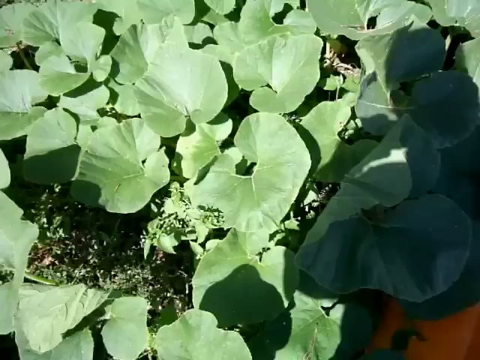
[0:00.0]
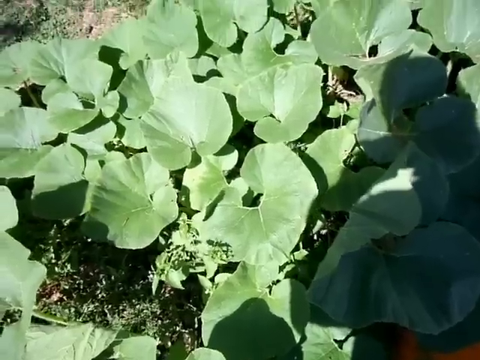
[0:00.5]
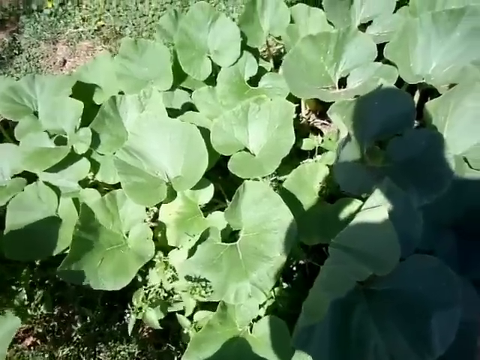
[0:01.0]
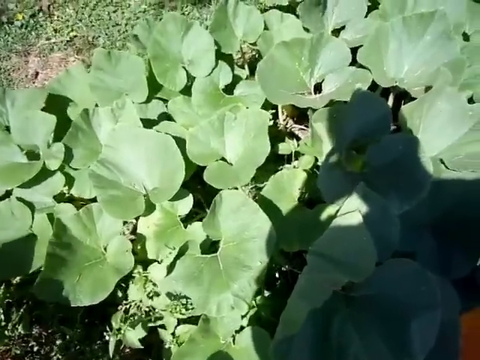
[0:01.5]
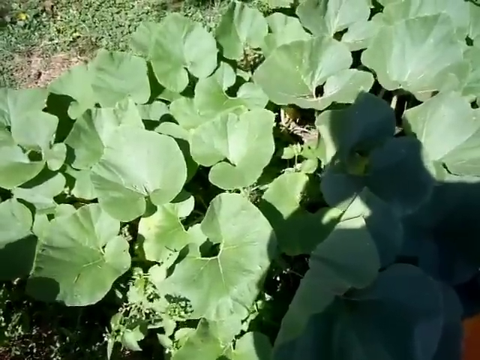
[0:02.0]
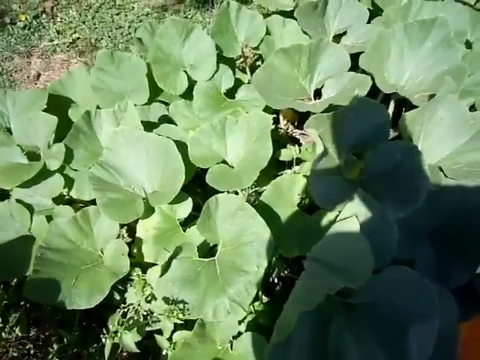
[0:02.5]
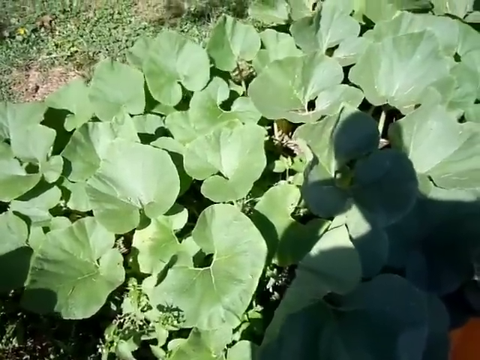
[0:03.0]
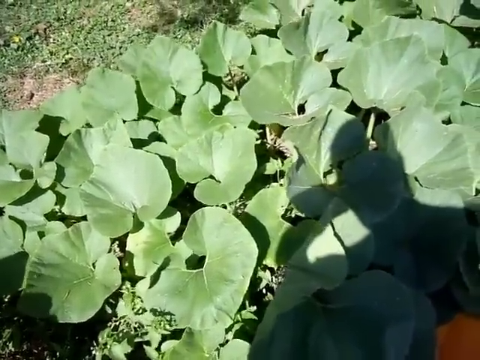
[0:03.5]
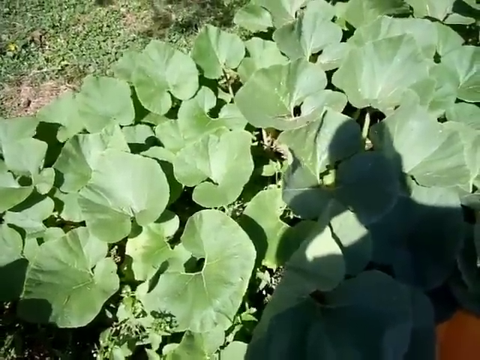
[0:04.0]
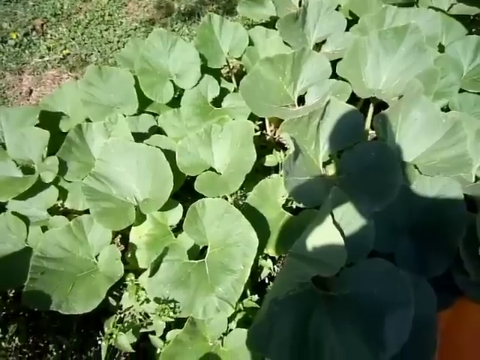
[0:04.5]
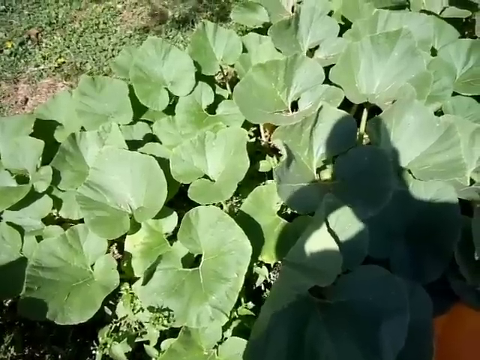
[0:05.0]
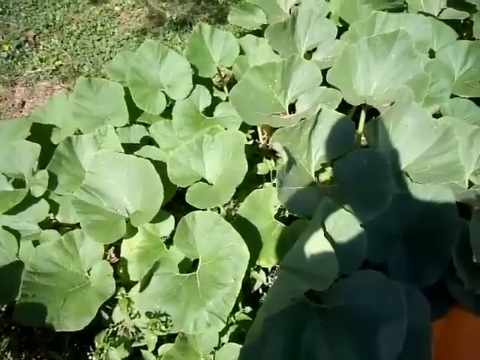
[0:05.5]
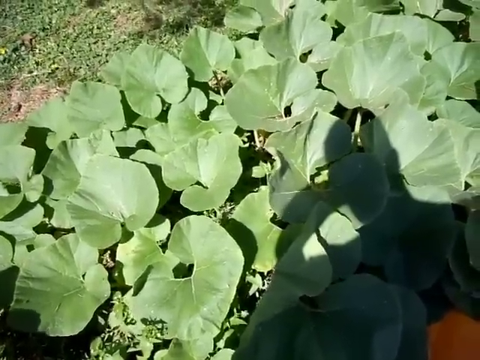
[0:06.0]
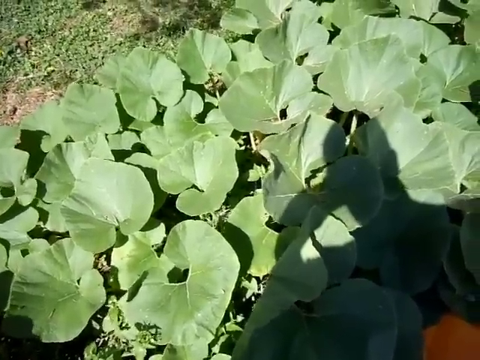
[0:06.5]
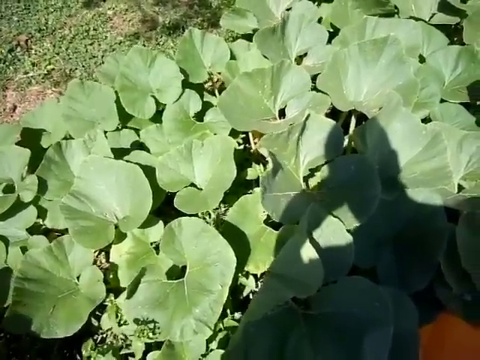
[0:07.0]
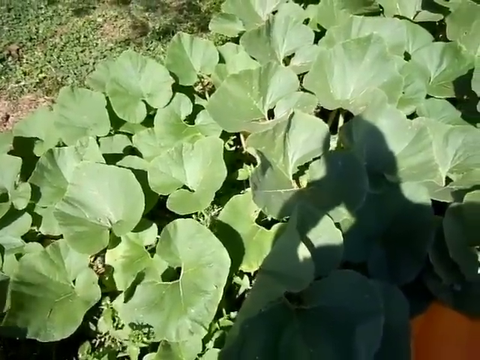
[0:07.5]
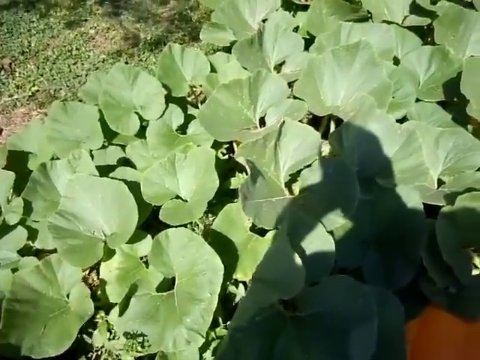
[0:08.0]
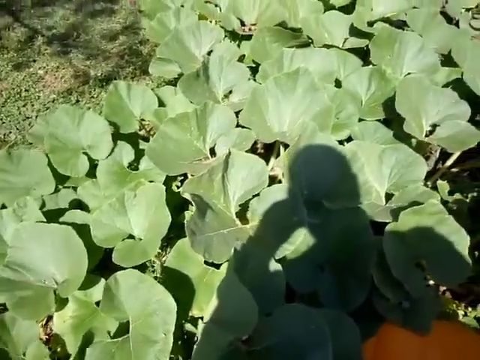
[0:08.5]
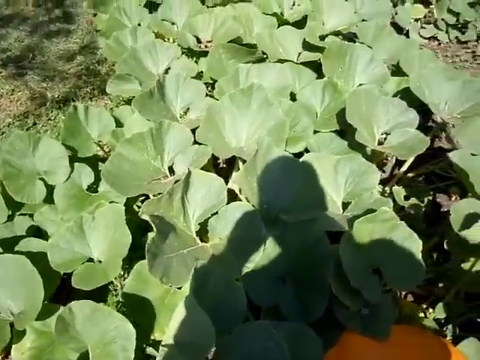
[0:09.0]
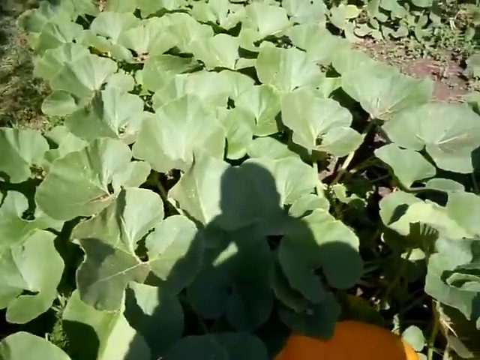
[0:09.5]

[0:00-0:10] A large green pumpkin vine fills the view. It is windy, and the pumpkin leaves are blowing quite hard in the wind. In the upper left of the frame is a patch of grass. In the lower right and center right is the shadow of the person filming, who is backlit by the sun; the shadow has a hand raised to the face, probably holding a phone camera. The camera switches around, and an orange pumpkin appears at the bottom of the screen.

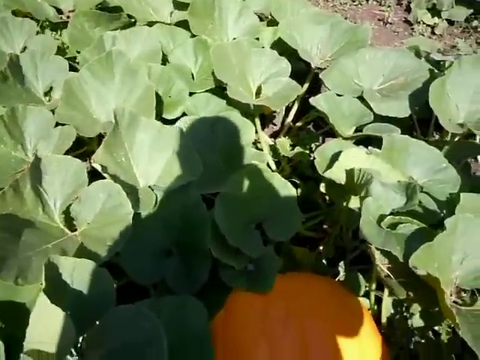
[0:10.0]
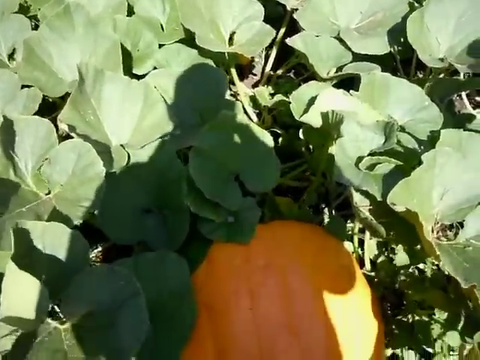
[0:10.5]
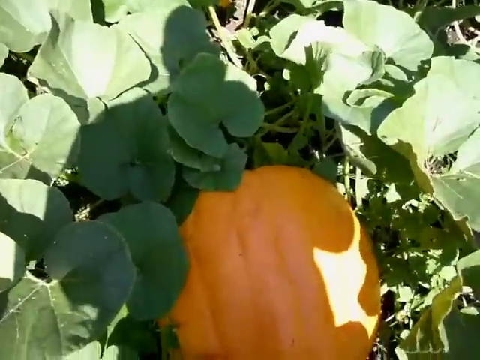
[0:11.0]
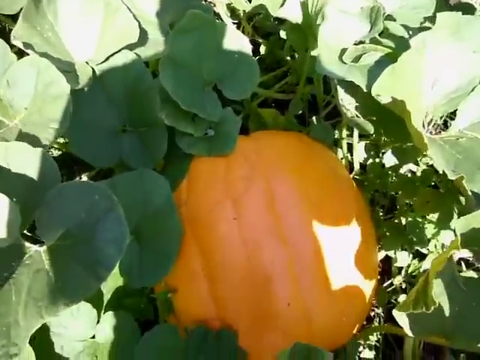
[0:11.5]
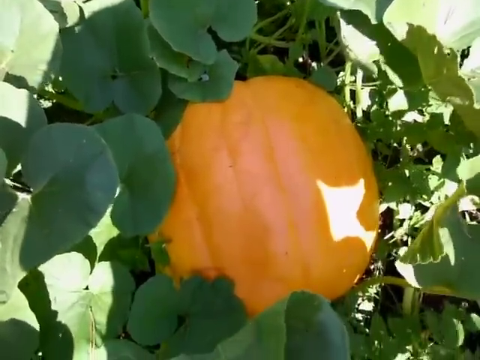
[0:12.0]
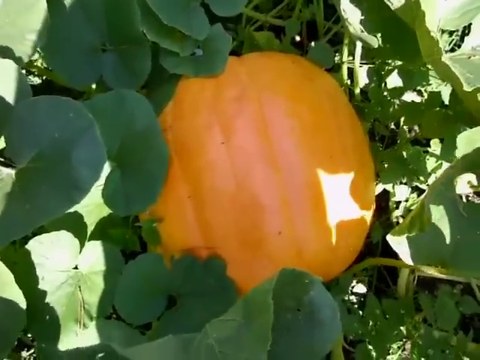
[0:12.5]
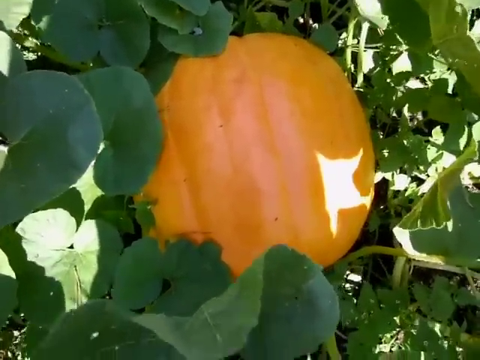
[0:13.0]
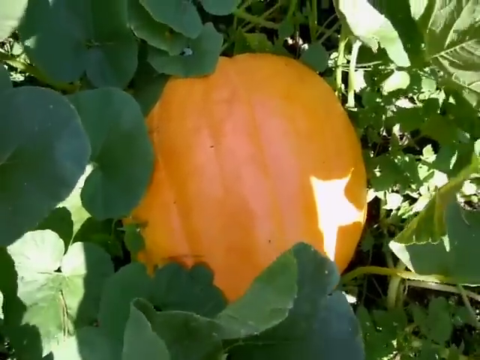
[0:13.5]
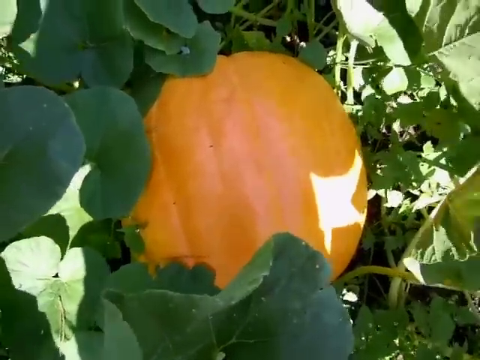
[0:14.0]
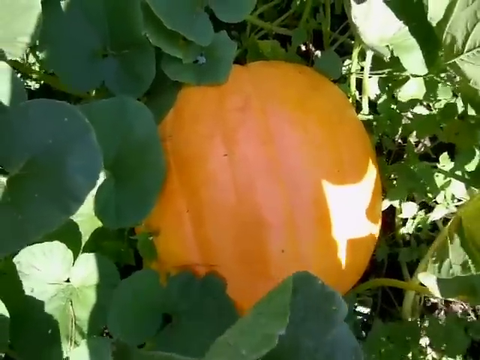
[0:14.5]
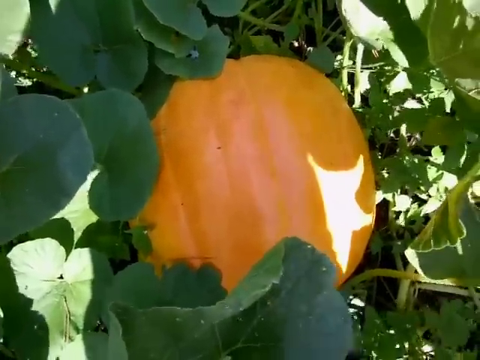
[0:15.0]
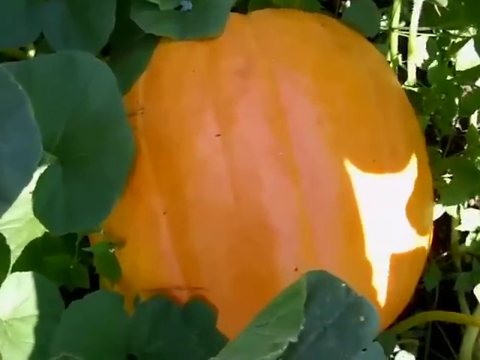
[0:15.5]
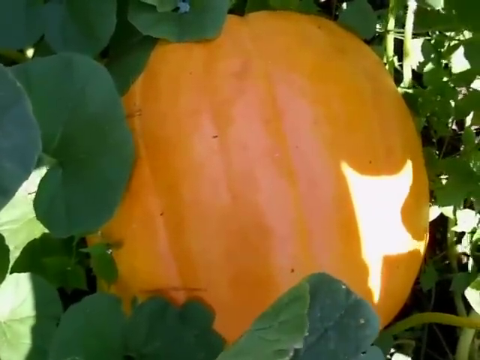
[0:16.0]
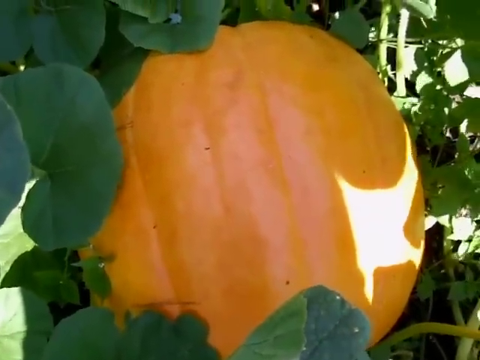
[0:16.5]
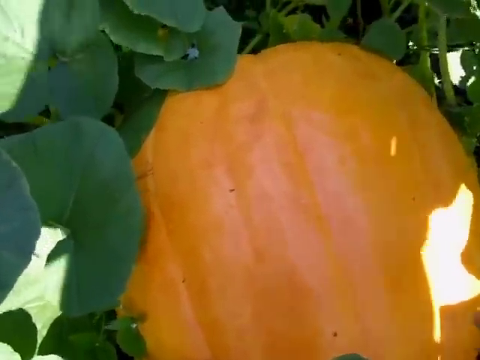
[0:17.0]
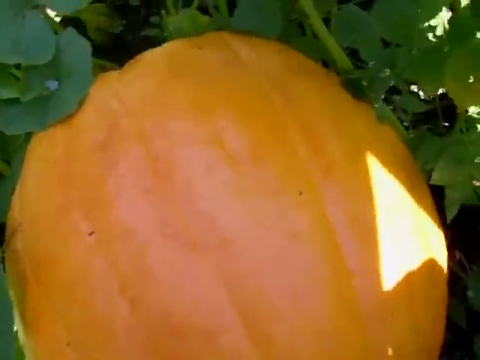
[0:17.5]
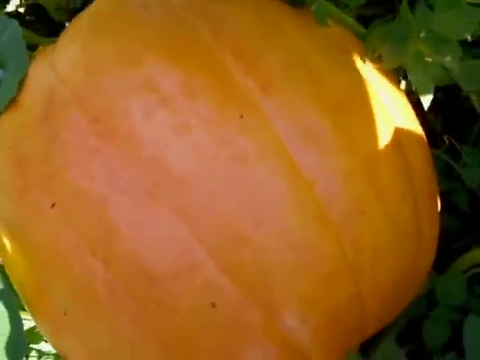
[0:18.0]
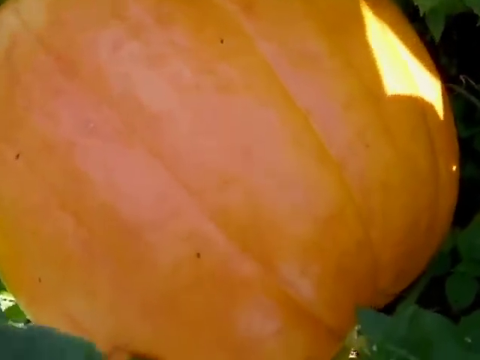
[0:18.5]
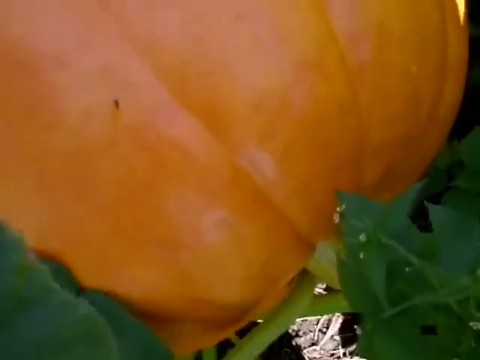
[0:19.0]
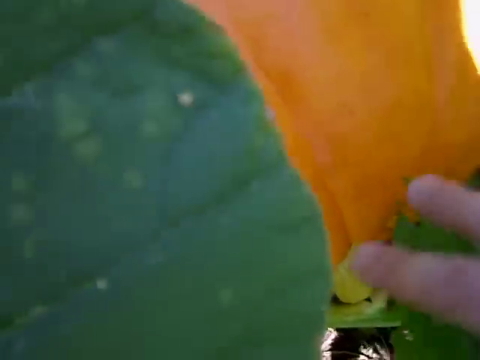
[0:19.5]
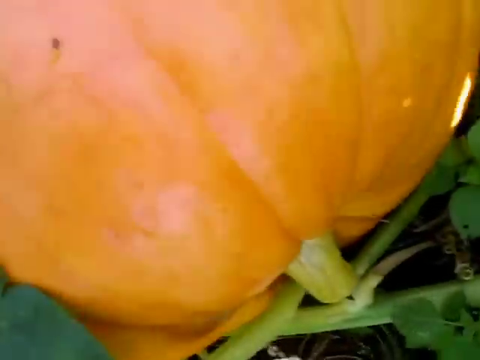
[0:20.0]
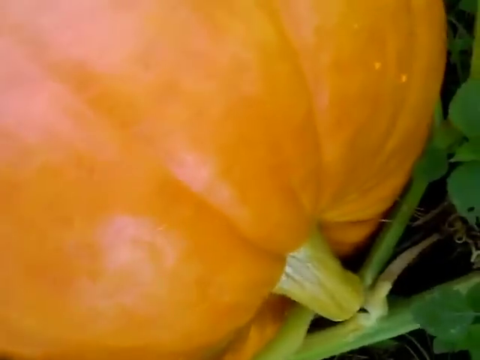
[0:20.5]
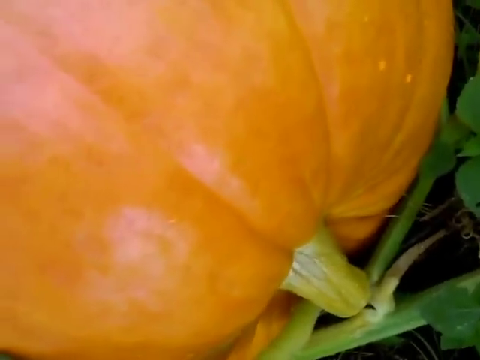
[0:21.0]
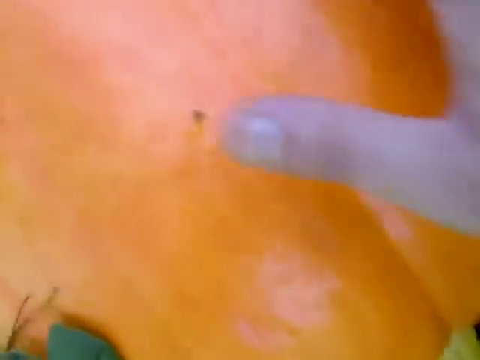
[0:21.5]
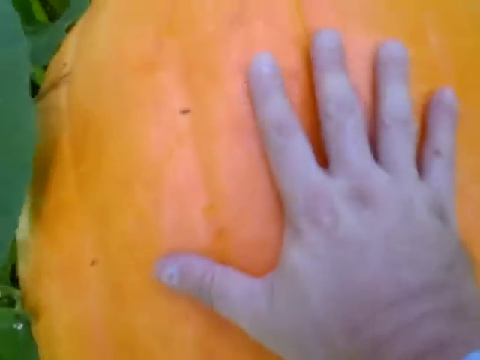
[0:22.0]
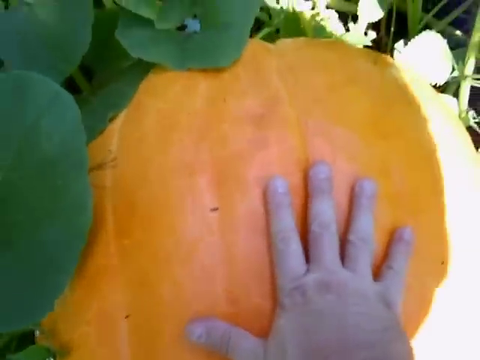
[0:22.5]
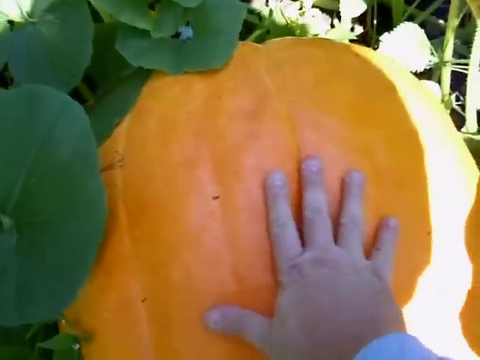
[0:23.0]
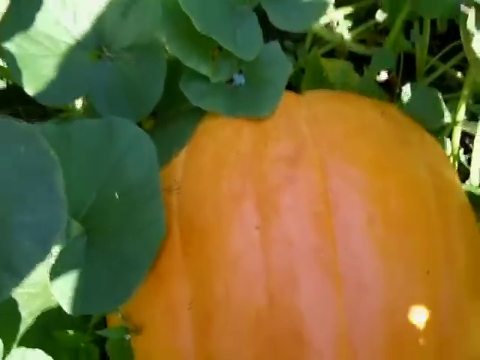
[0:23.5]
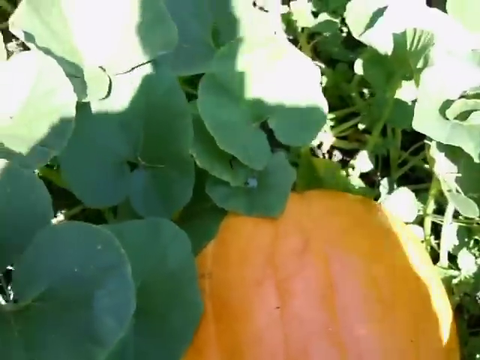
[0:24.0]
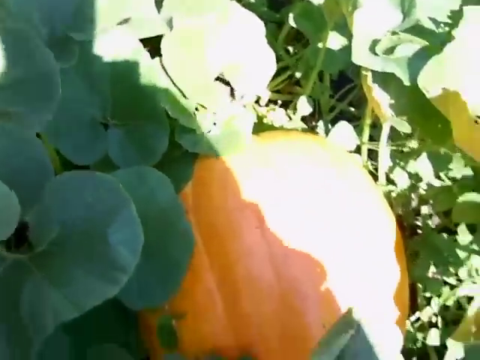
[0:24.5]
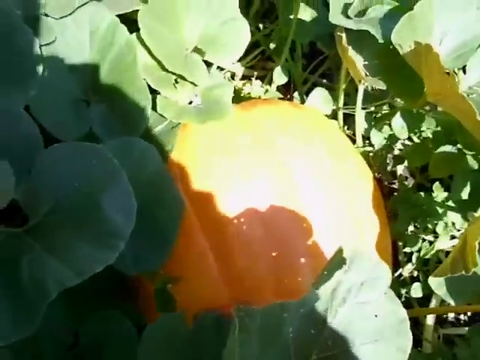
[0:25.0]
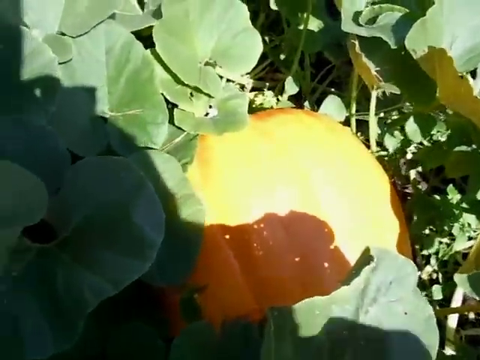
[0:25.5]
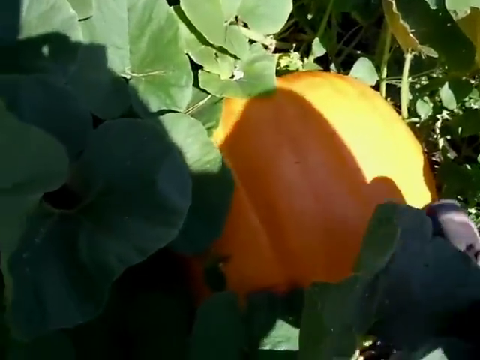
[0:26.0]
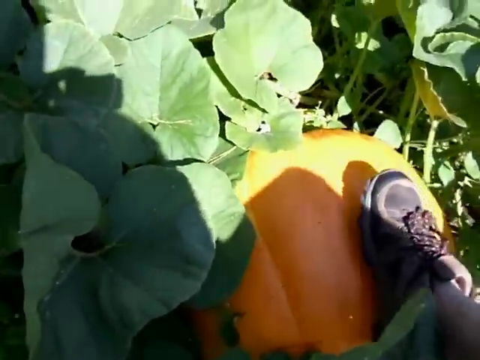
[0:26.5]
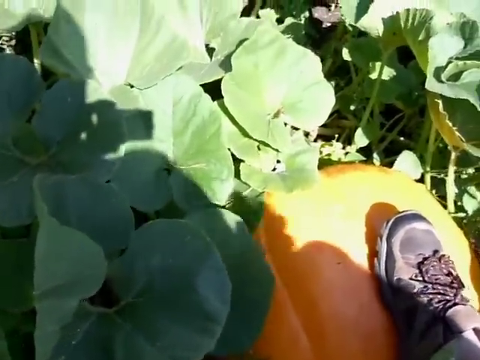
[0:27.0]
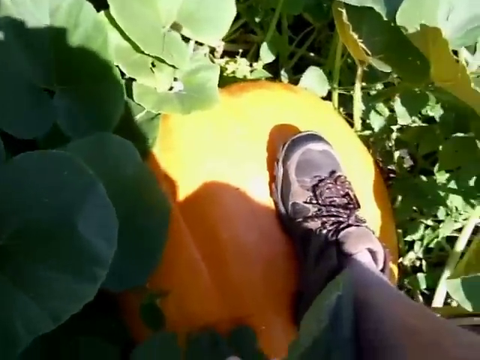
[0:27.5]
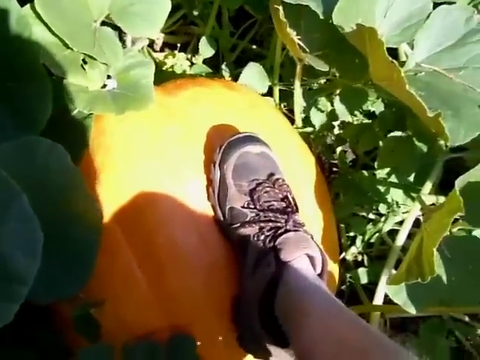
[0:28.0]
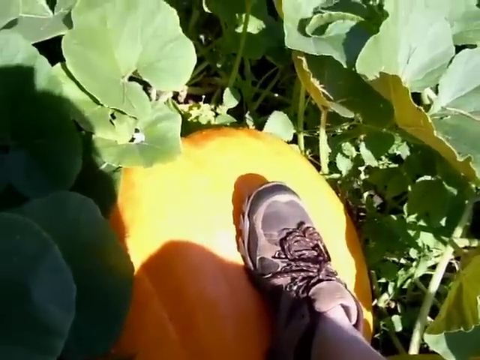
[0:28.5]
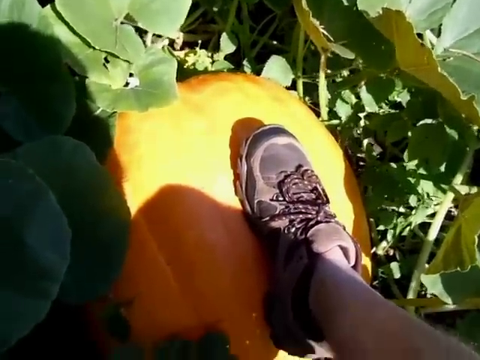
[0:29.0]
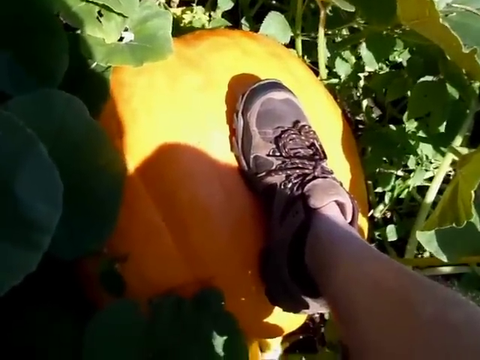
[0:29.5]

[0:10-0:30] The large pumpkin vine fills most of the screen, with a patch of brown earth in the upper right corner. In the center of the lower screen is the shadow of the person taking the video, and in the center of his shadow is a large orange pumpkin. The camera pans down until the entire pumpkin is visible. Sunlight highlights the lower right quadrant of the pumpkin and the vines on that side. The wind is blowing. The camera moves closer to the pumpkin and then down to show the stem where it is attached to the vine. The operator puts his right hand on the pumpkin to show the scale, then takes it away and steps back, his shadow moving. The upper part of the screen is then in bright sunlight, and the person places their right foot on top of the pumpkin. They are wearing a brown and tan sneaker with brown and tan shoelaces.